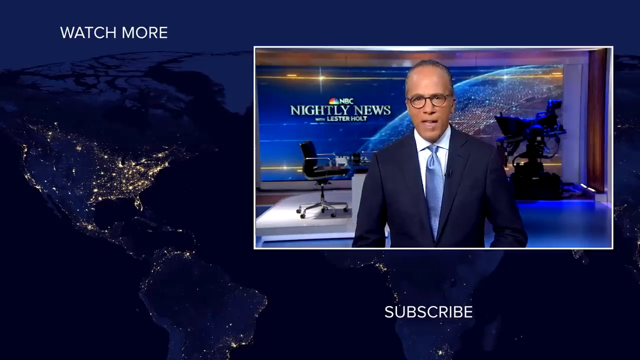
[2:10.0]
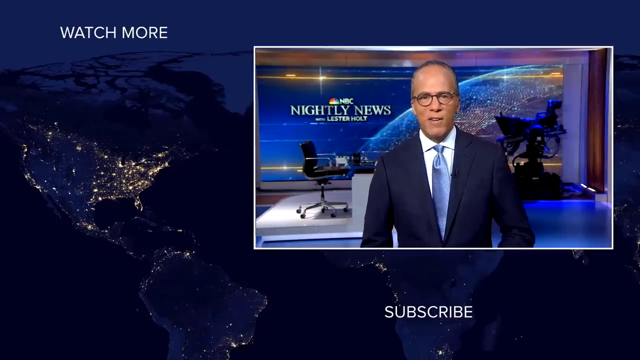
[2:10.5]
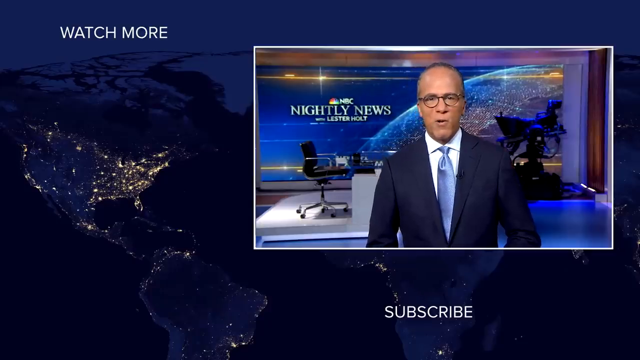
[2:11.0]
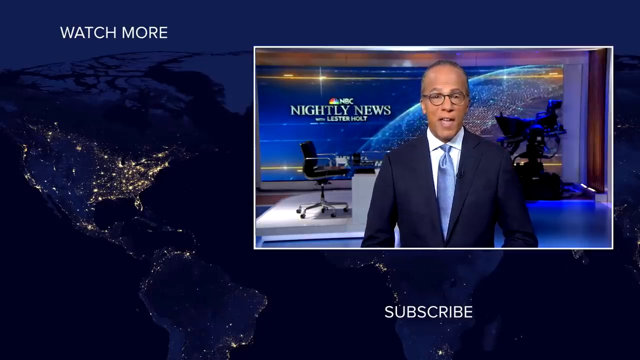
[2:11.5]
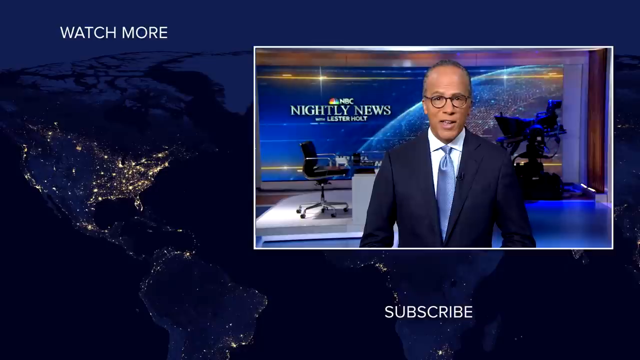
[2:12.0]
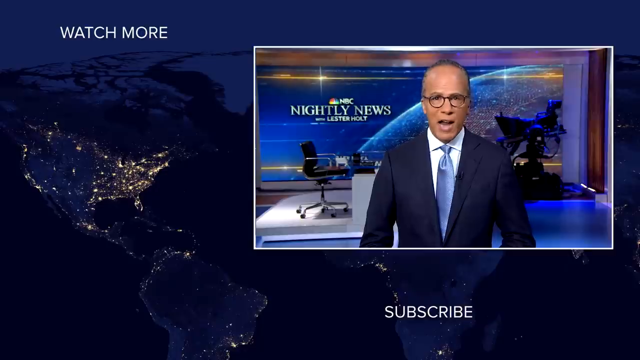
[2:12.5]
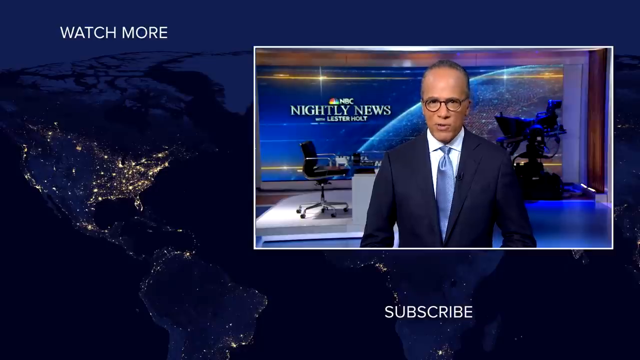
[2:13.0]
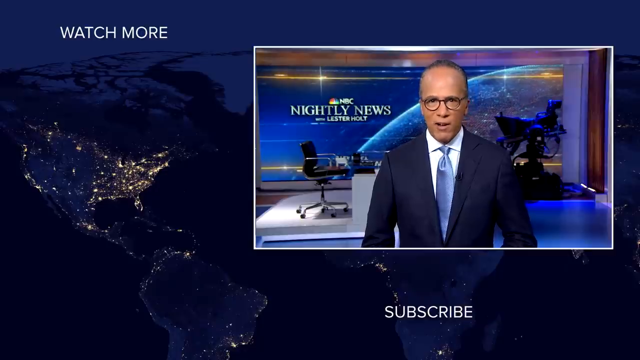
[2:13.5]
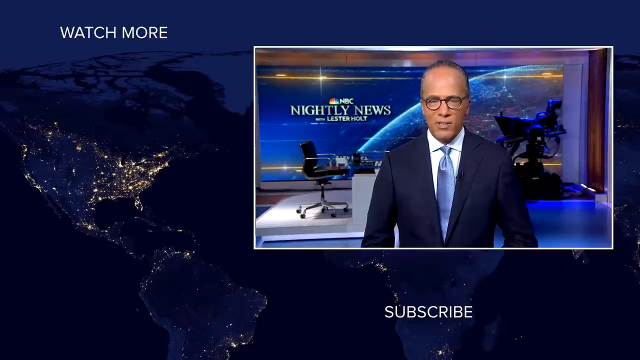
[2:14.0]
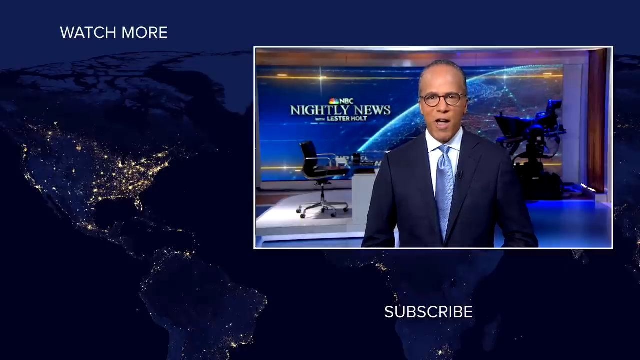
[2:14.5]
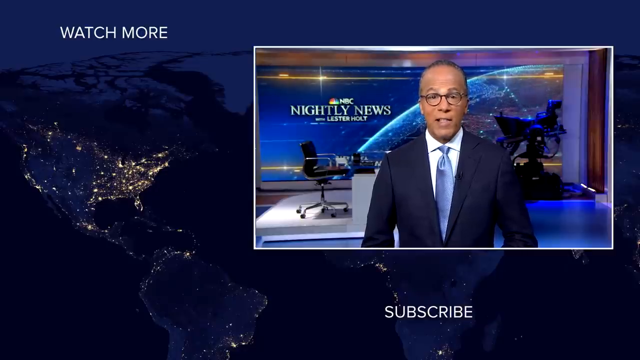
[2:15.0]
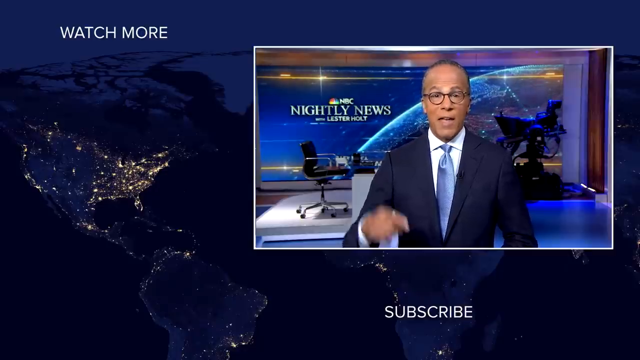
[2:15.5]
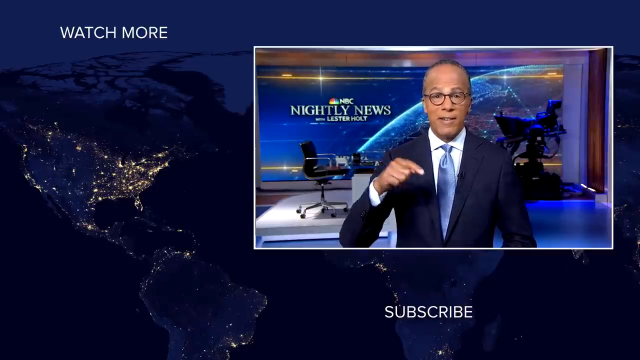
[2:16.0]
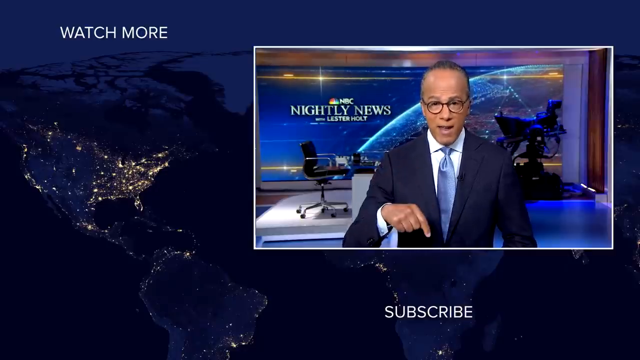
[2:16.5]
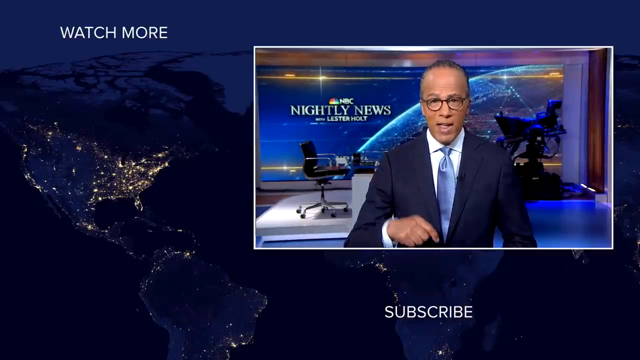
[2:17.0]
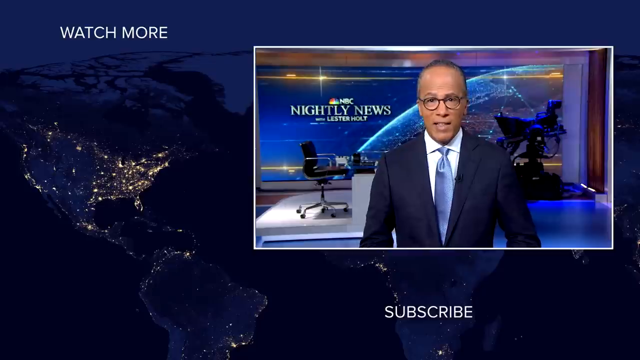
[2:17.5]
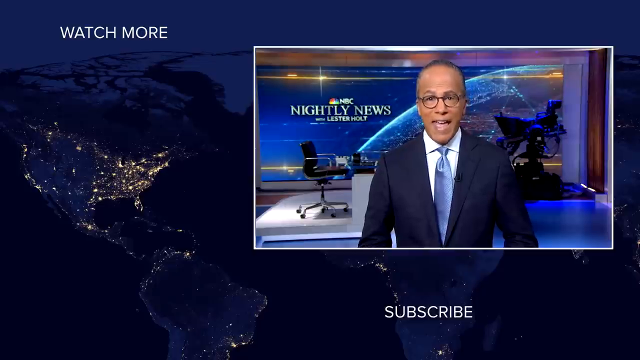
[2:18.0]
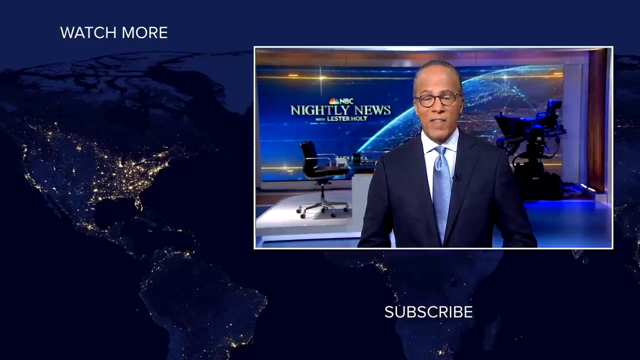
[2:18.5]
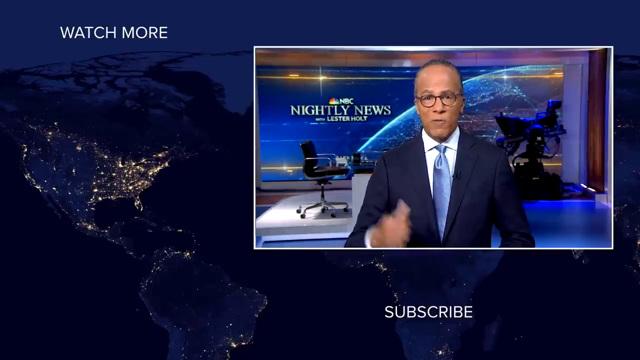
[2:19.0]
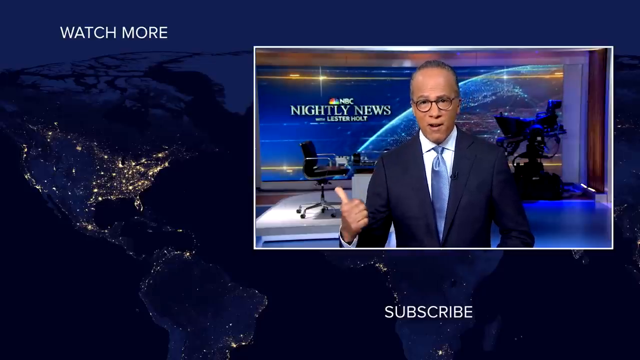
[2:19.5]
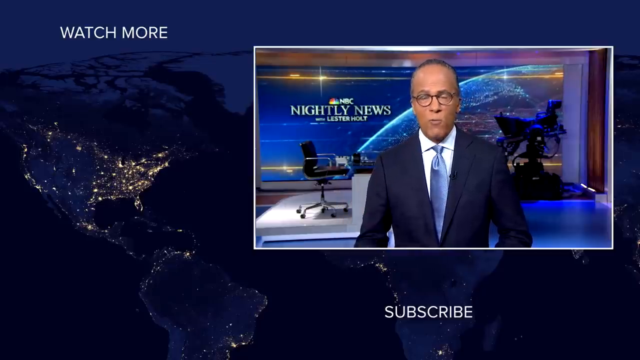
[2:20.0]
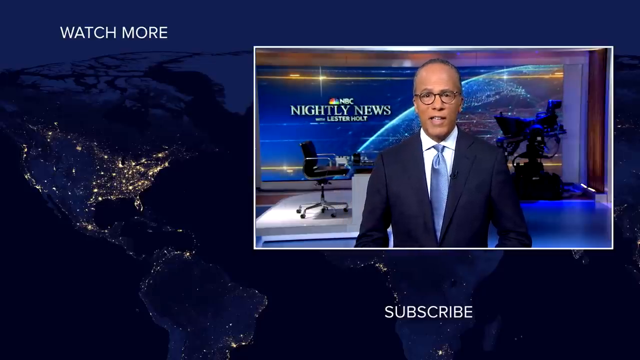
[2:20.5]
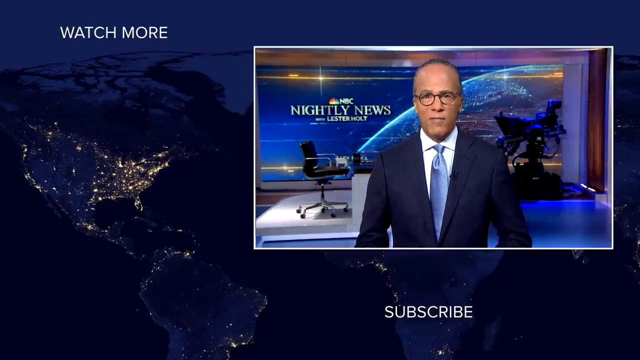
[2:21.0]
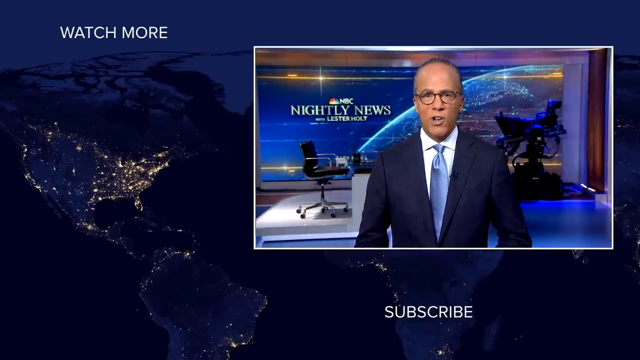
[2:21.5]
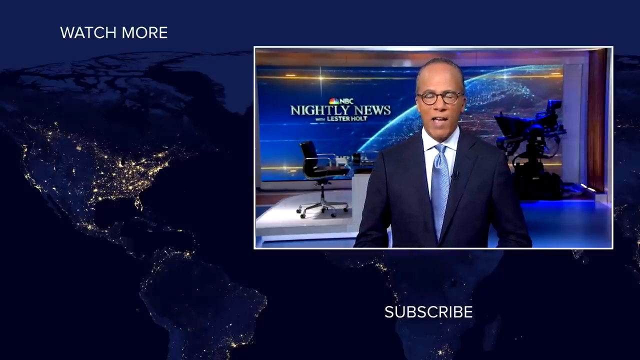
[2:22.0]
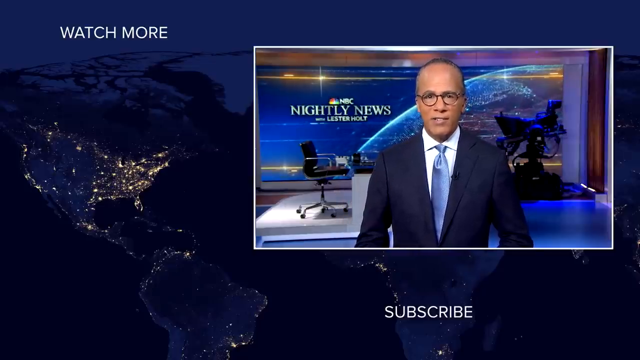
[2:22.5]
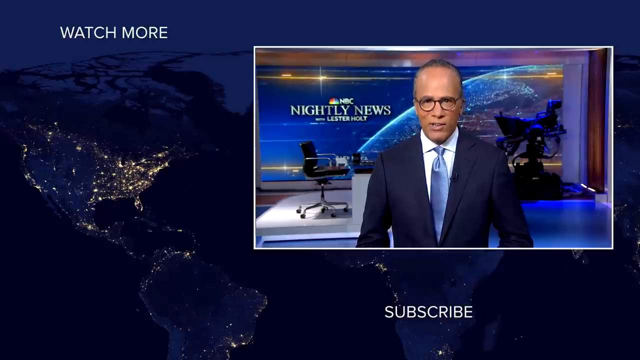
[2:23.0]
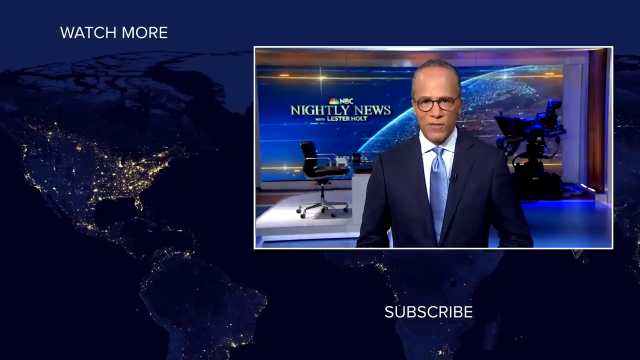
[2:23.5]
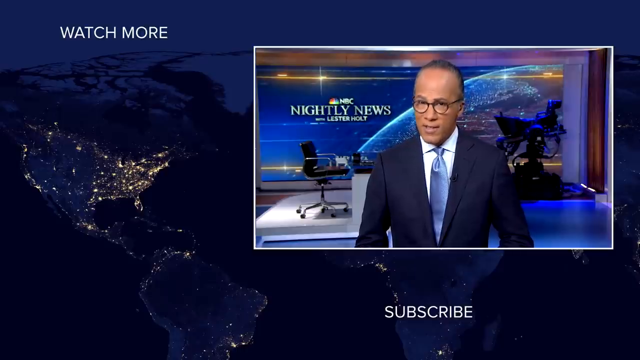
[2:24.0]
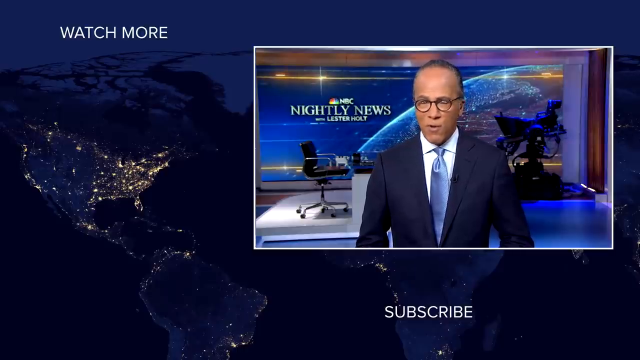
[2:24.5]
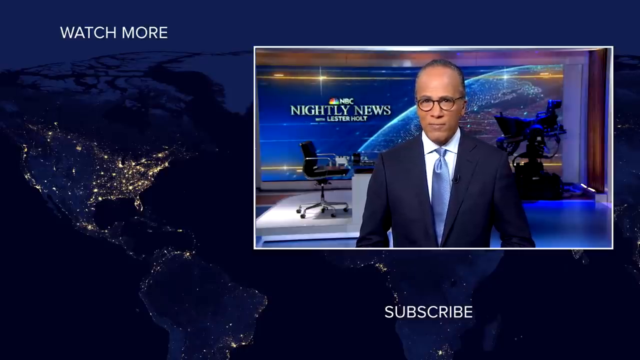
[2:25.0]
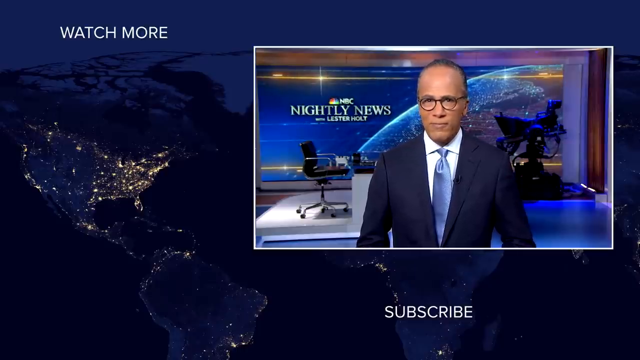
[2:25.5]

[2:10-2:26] The NBC News segment shows its outro, which includes a blue world map with various lights shown on the map in each country. At the top left, "watch more" is written in white, and at the bottom right, "subscribe" is written in white. Overlaid on the map is a video feed of a news reporter talking directly to the camera. He wears a navy blue suit, a white shirt, a light blue tie, and sunglasses. Behind him is a giant monitor that says "Nightly News with Lester Hawley," with the NBC logo in front of the monitor. There is a desk that also includes a chair, and to the right of that is a camera.